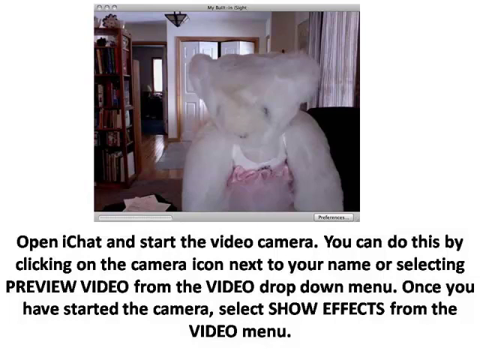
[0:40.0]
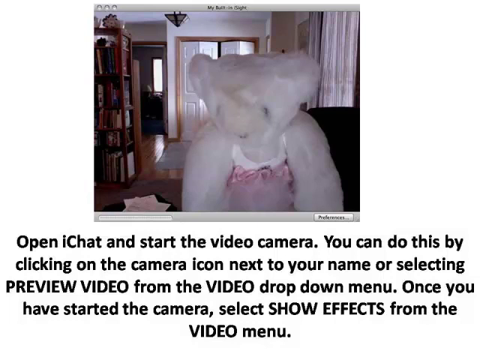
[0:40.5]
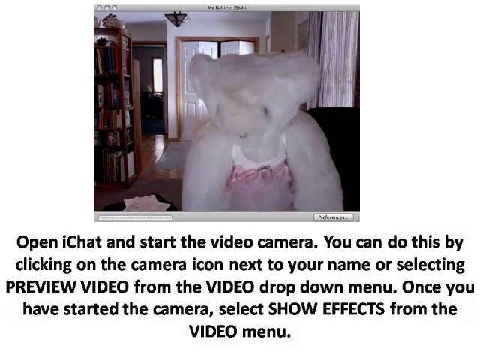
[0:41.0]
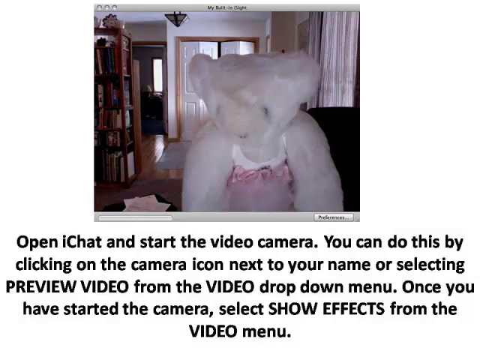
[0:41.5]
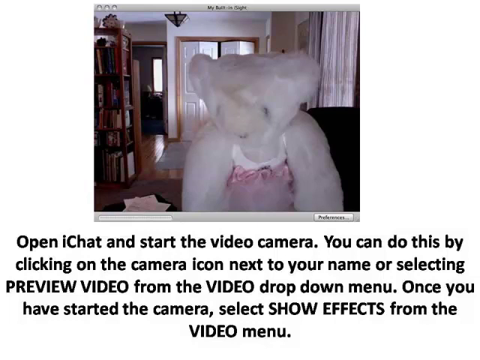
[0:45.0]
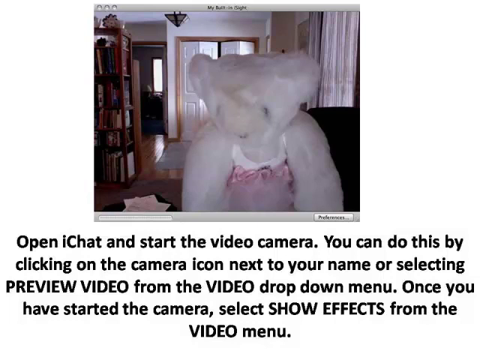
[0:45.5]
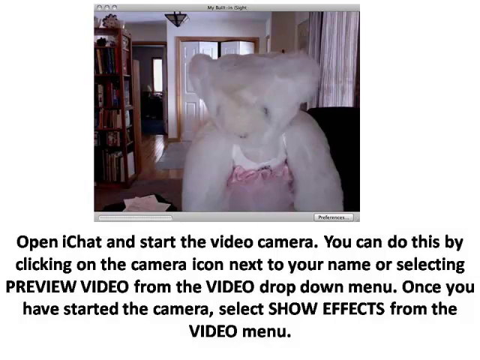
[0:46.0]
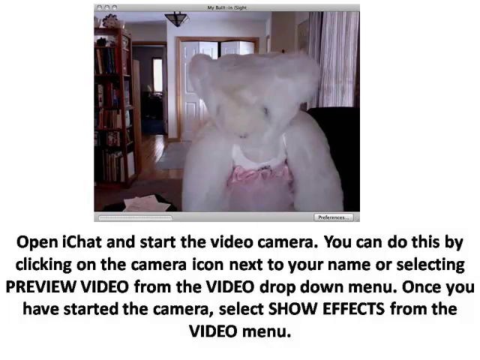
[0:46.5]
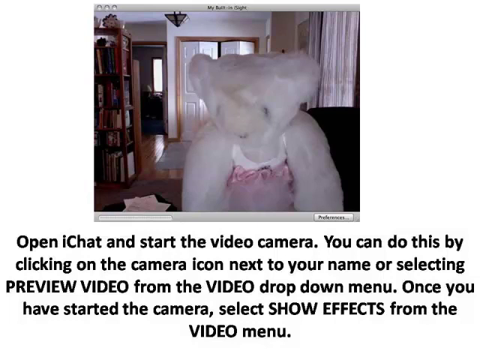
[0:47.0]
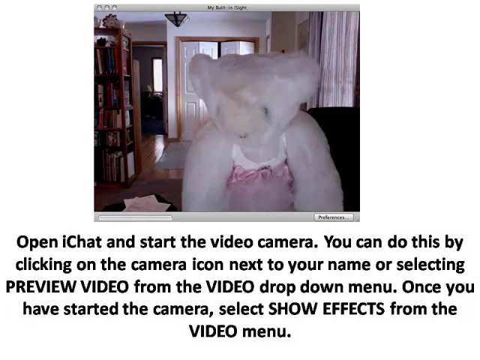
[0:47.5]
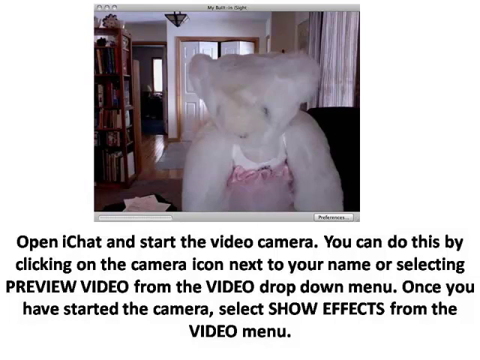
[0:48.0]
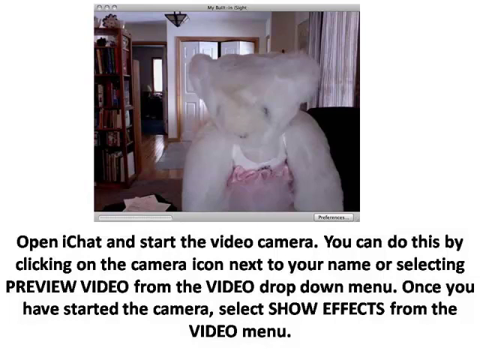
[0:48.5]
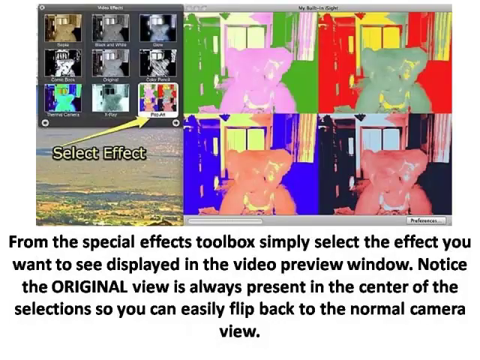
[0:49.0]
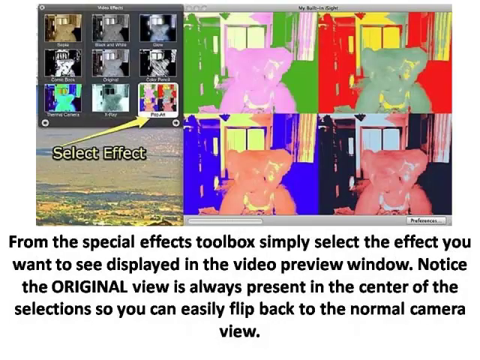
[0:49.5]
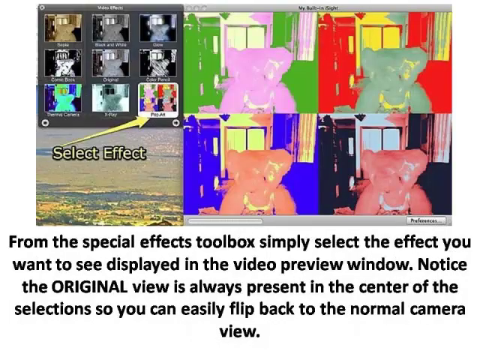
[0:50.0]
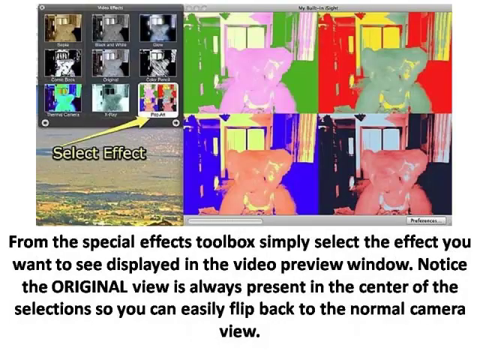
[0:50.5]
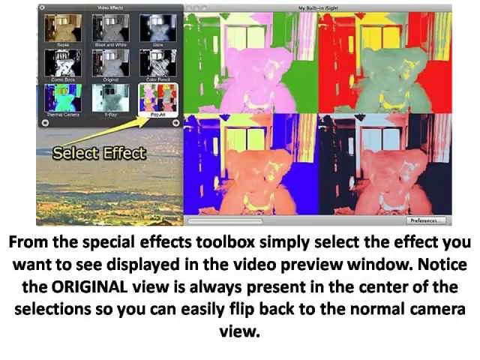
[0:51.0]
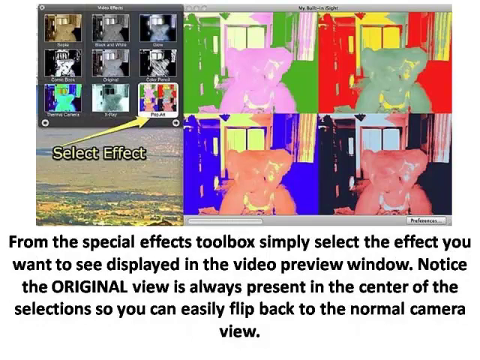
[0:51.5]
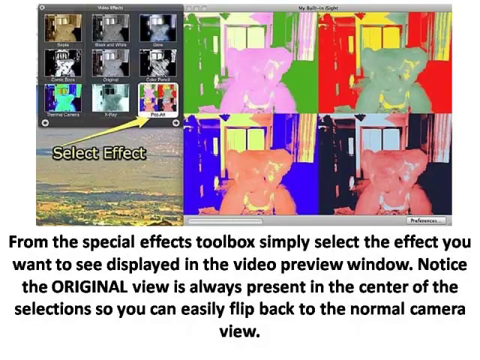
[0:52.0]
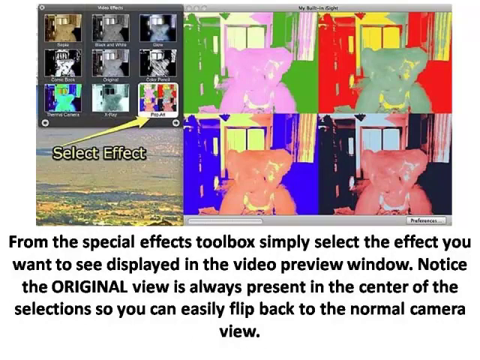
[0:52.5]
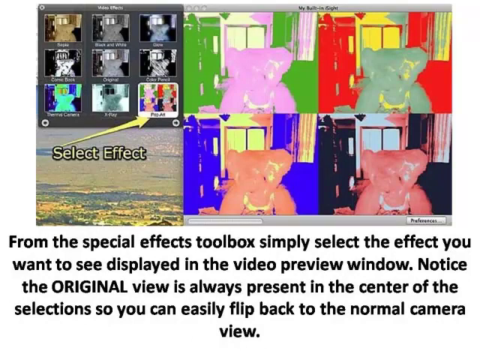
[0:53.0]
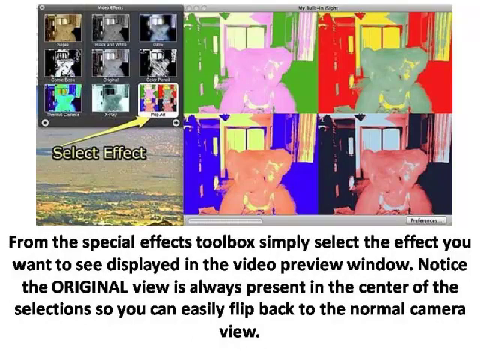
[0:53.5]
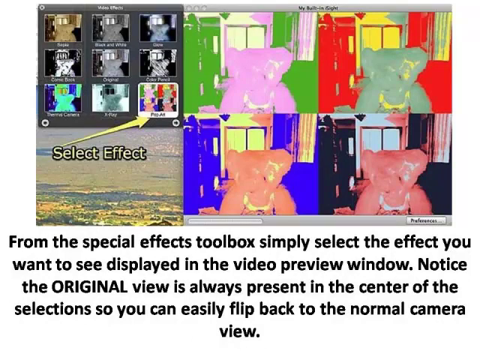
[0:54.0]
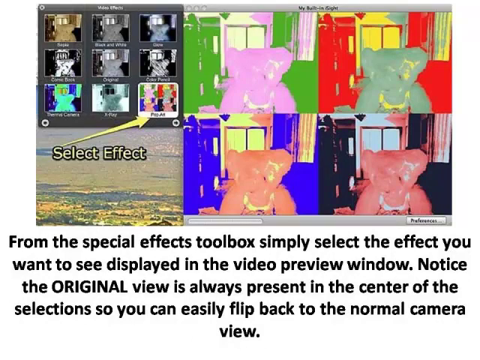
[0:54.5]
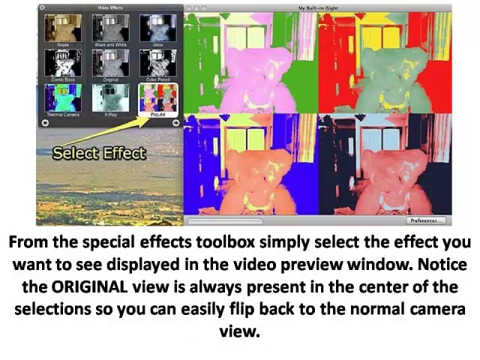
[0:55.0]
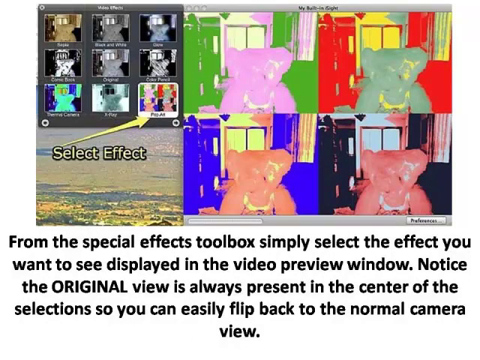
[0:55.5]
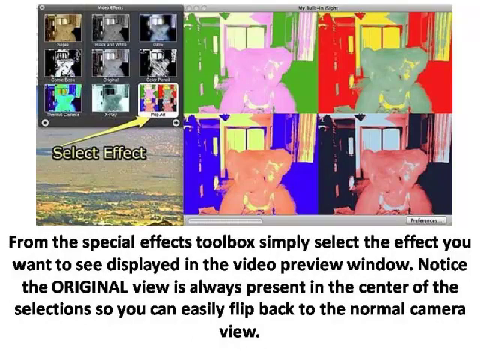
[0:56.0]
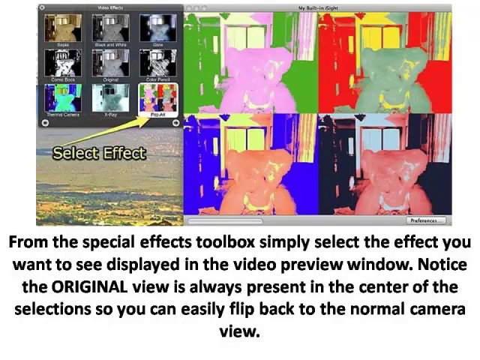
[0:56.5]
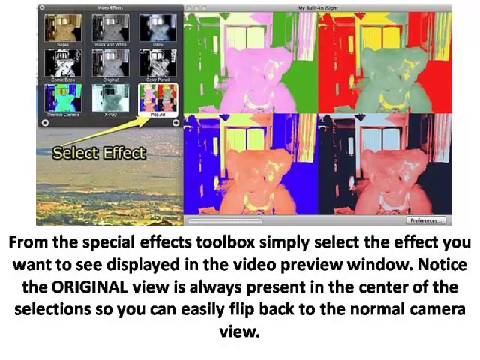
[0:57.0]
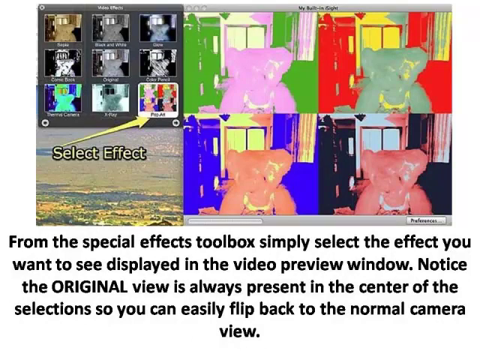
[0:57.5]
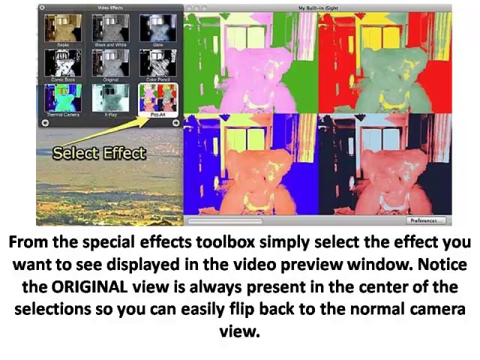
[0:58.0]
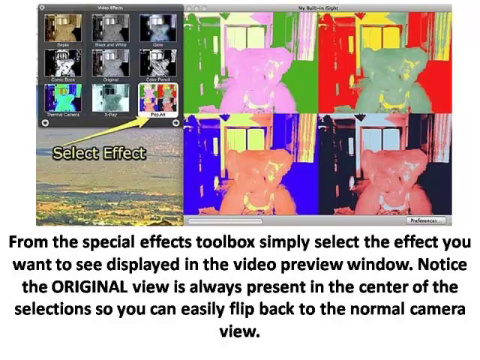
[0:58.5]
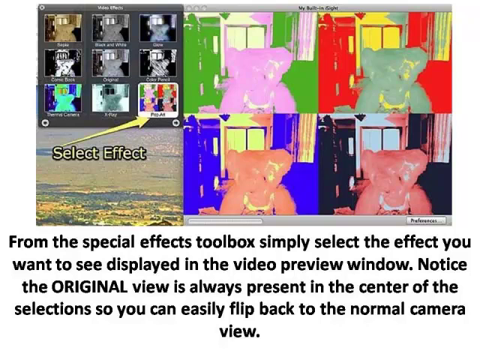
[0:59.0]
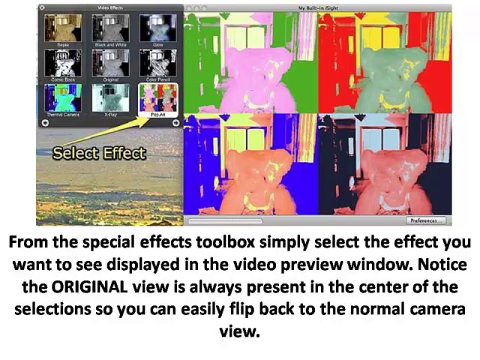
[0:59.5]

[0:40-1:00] The image of the white teddy bear in a room in a residential house is shown. There is a bookshelf, a door and a closet door, and there appear to be hardwood floors. There are white curtains, and what looks to be an area rug, a couch and some papers on a coffee table. Below the image the text reads: "open iChat and start the video camera. You can do this by clicking on the camera icon next to your name. Select a preview video from the video drop down menu. Once you have started the camera select show effects from the video menu." The next screen reads "select effect" and shows a grid of the bear image in different bright colors: a group of four in very bright, almost psychedelic colors, and on the left a grid of nine different images showing the different color options that can be selected.